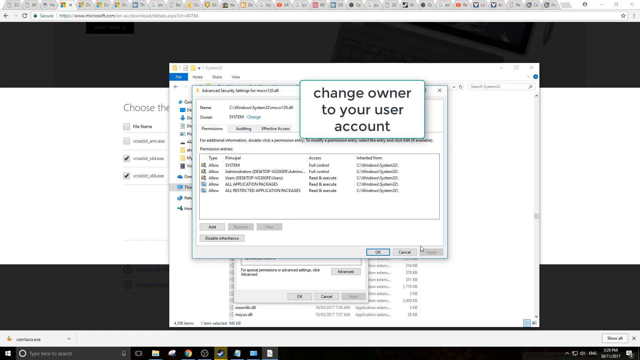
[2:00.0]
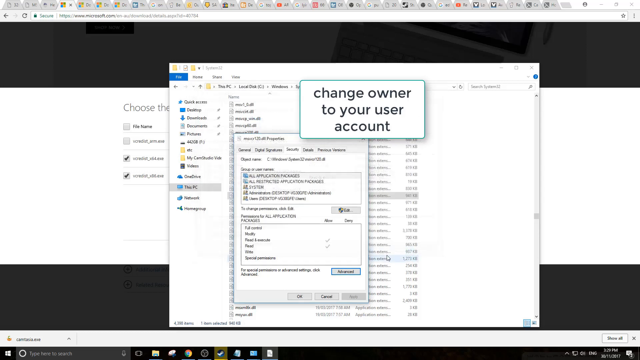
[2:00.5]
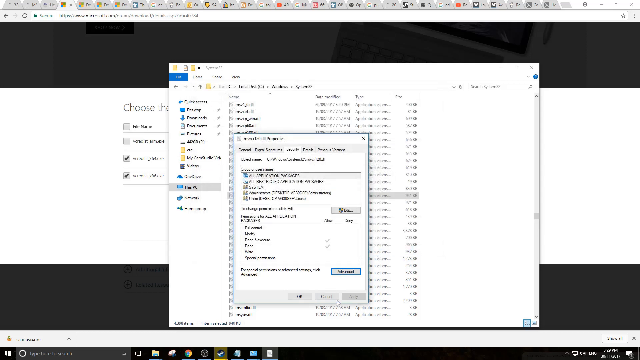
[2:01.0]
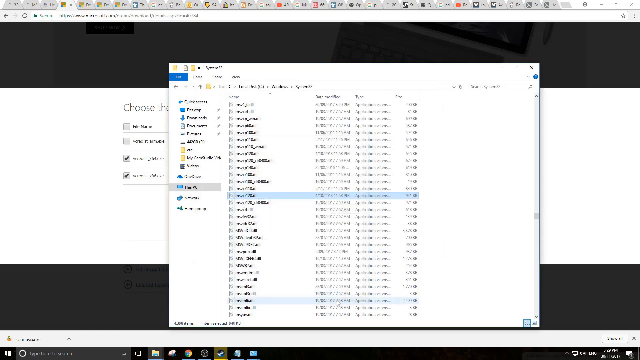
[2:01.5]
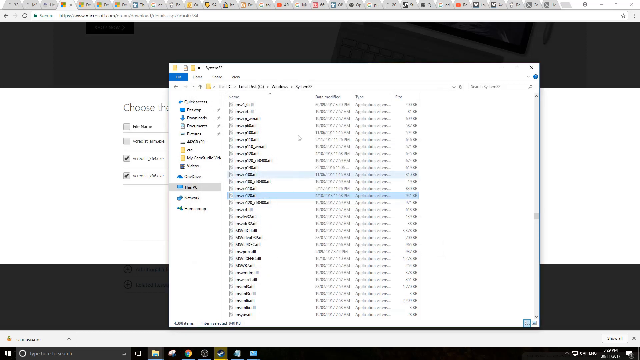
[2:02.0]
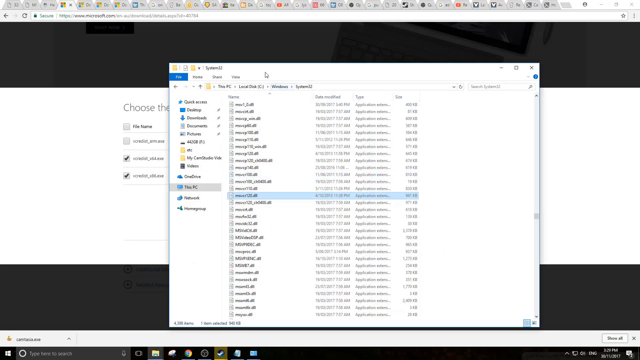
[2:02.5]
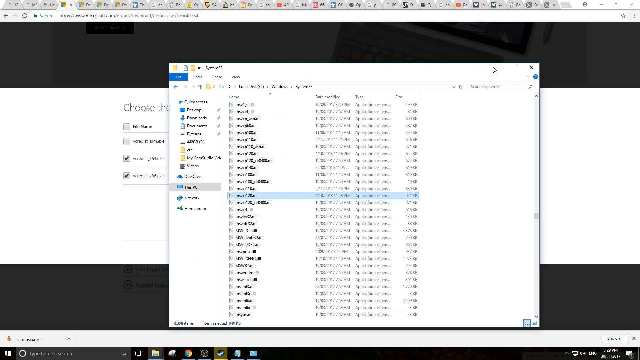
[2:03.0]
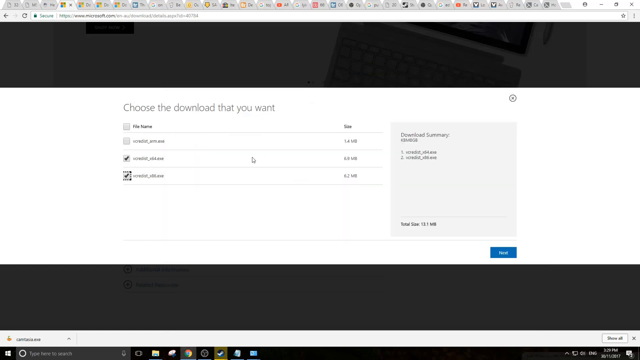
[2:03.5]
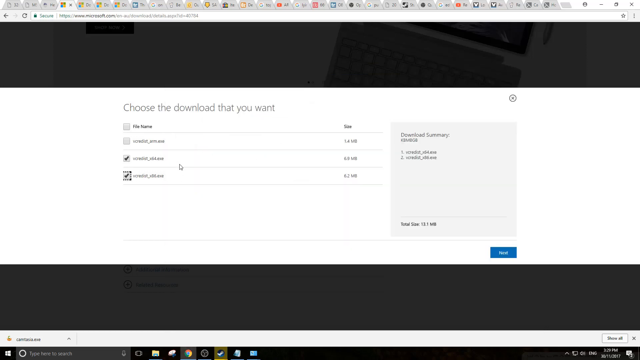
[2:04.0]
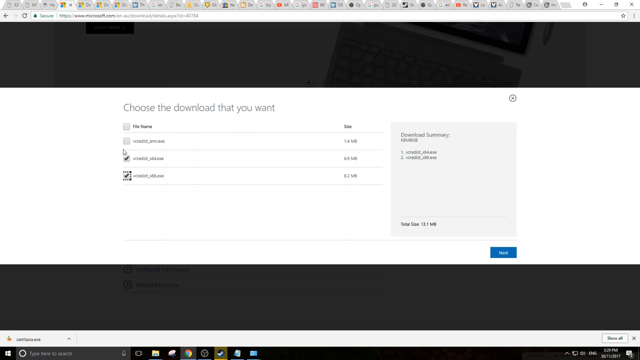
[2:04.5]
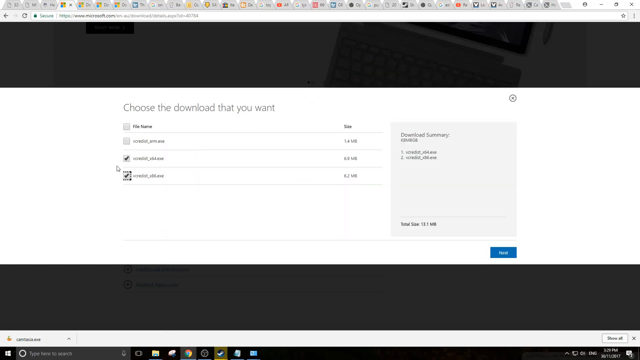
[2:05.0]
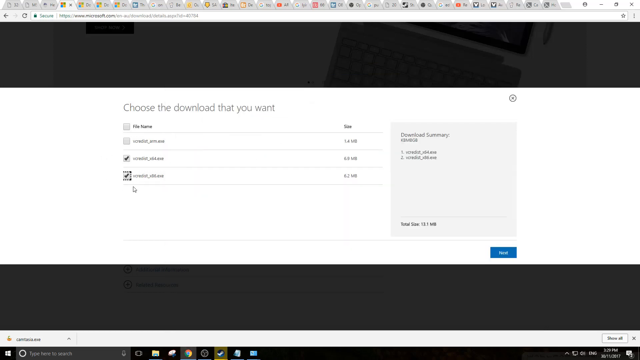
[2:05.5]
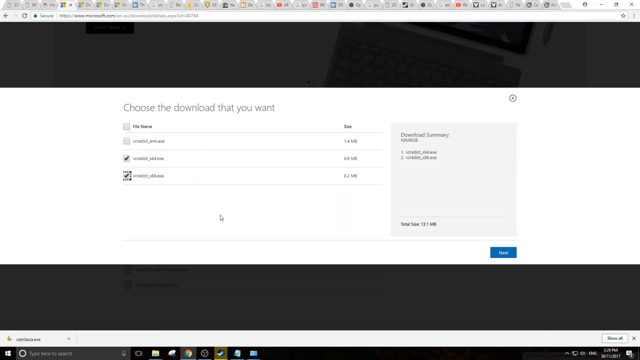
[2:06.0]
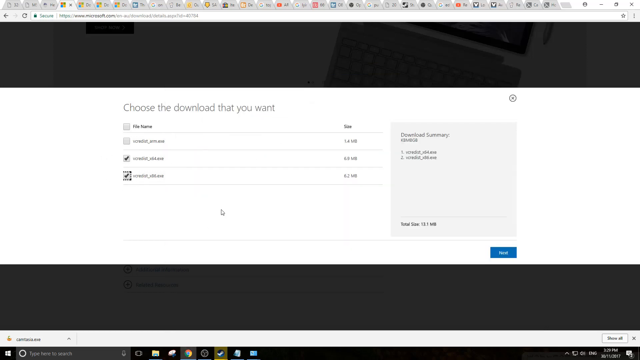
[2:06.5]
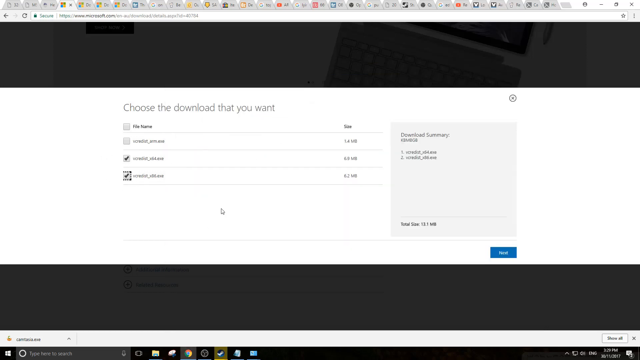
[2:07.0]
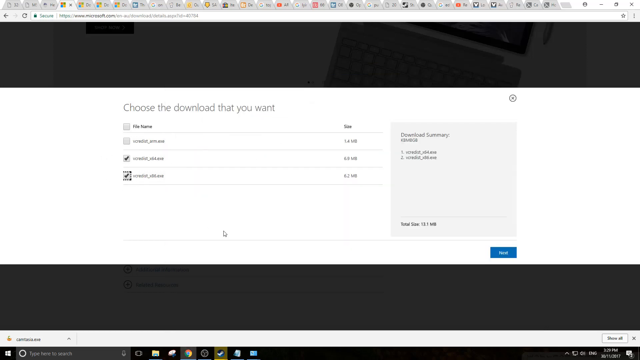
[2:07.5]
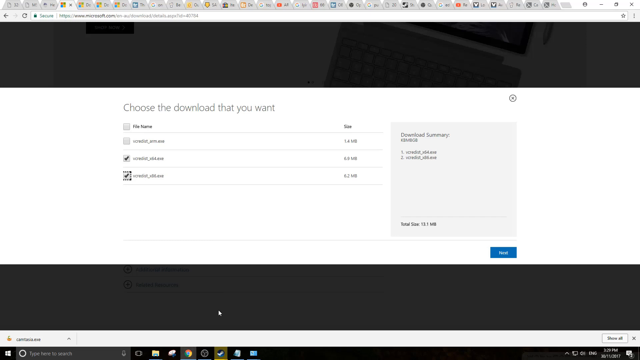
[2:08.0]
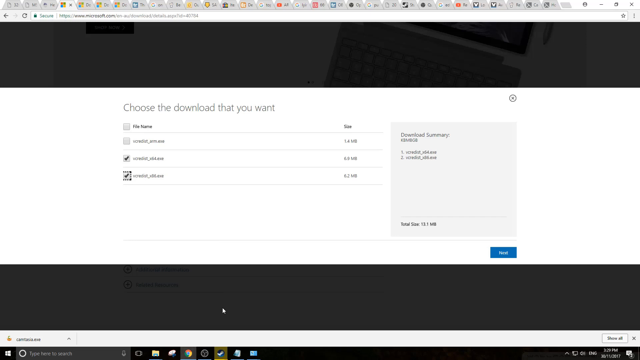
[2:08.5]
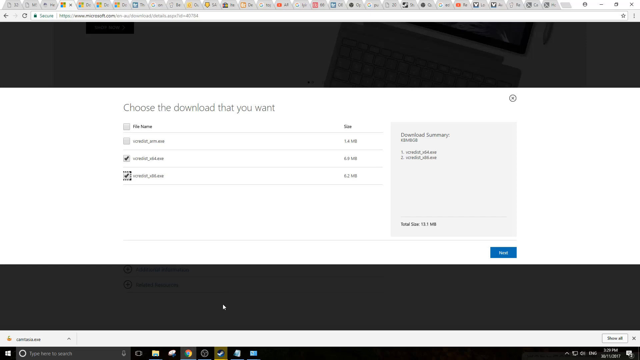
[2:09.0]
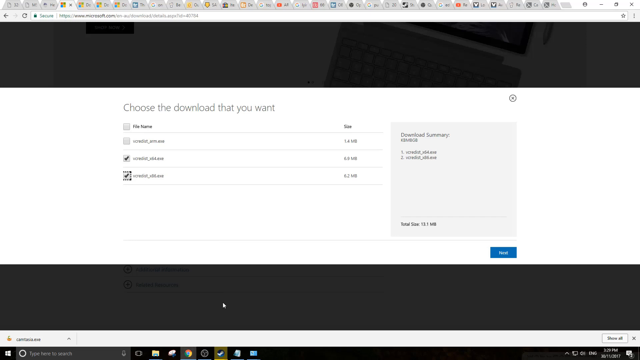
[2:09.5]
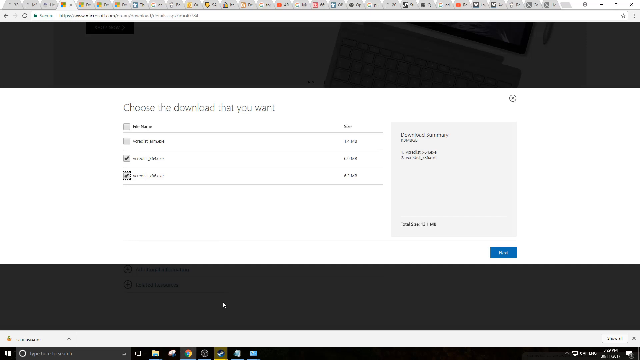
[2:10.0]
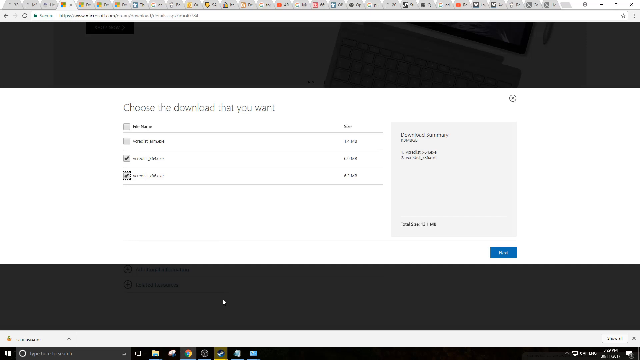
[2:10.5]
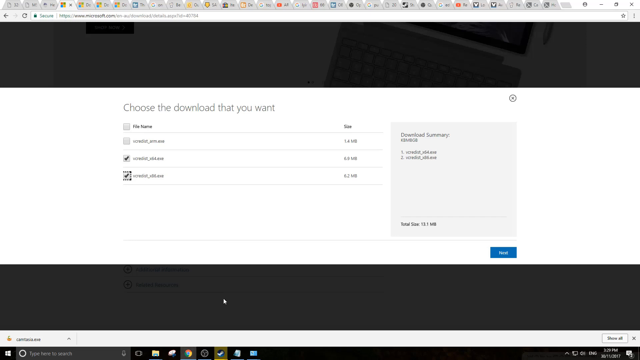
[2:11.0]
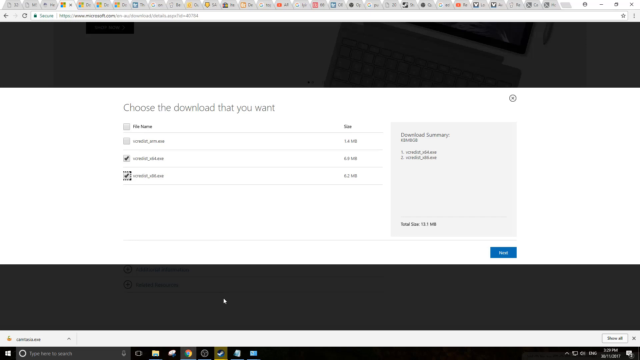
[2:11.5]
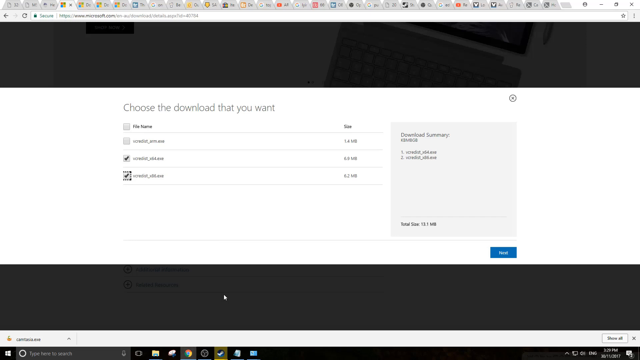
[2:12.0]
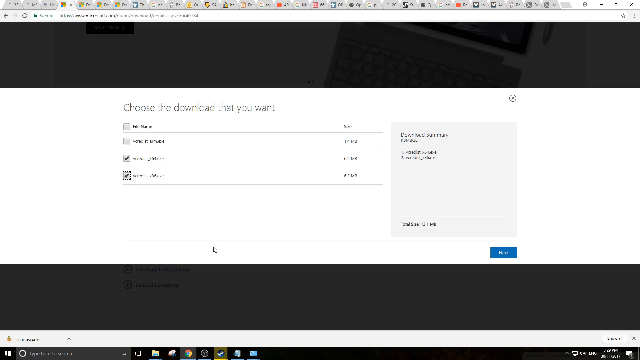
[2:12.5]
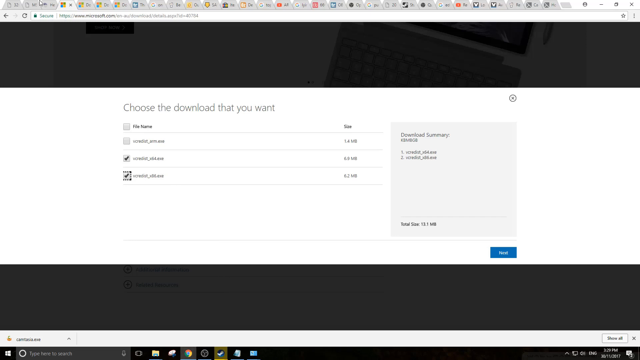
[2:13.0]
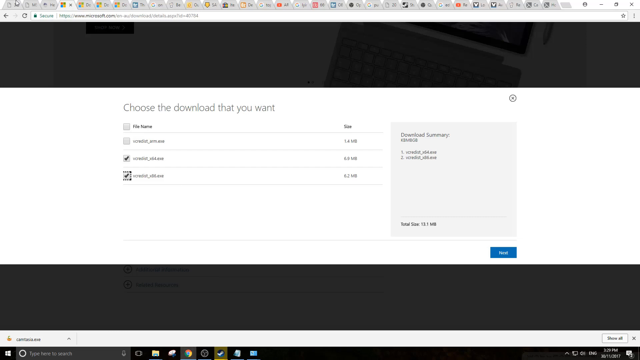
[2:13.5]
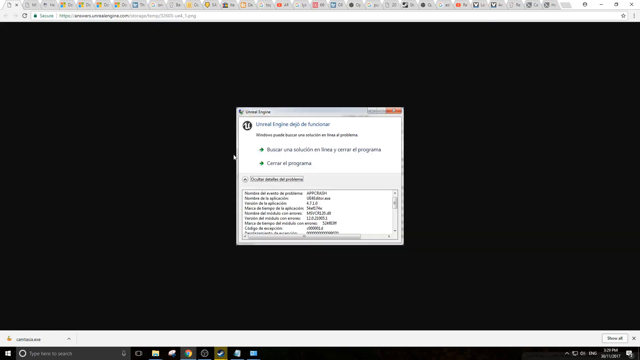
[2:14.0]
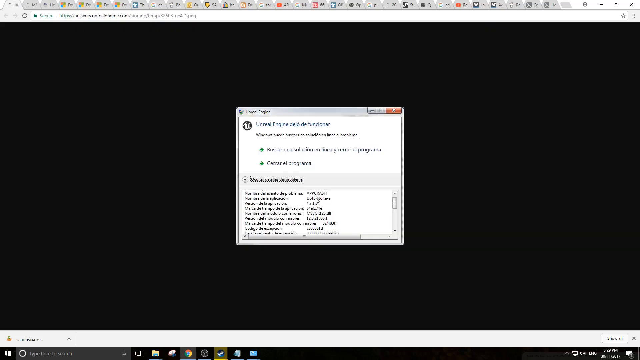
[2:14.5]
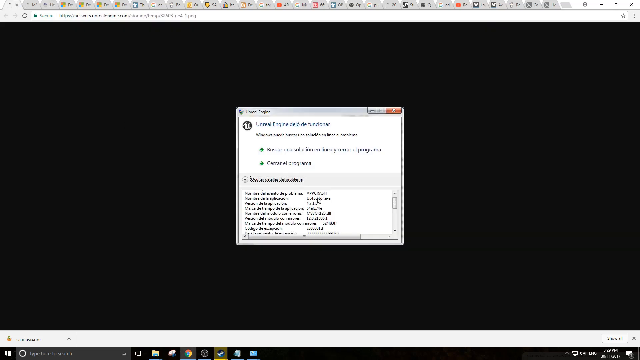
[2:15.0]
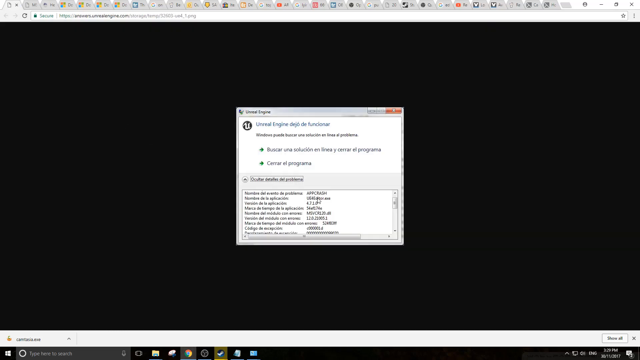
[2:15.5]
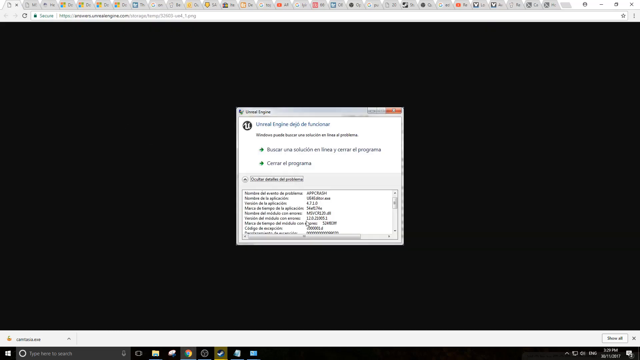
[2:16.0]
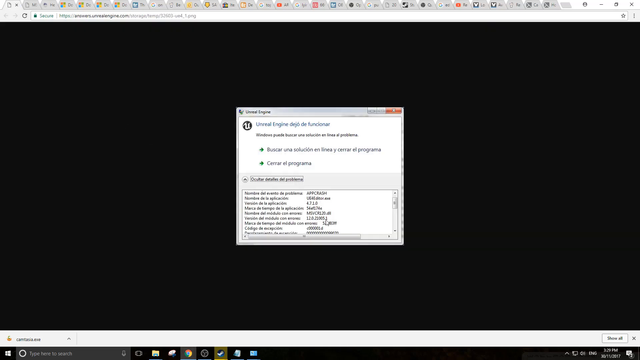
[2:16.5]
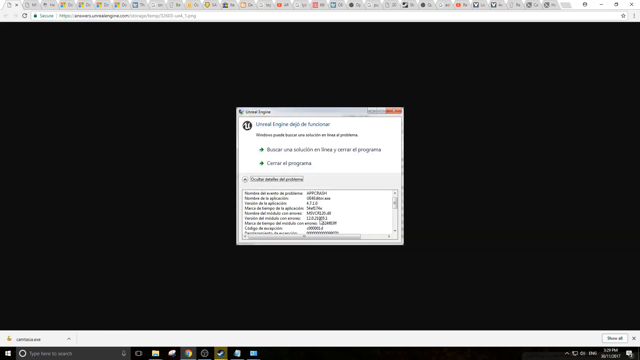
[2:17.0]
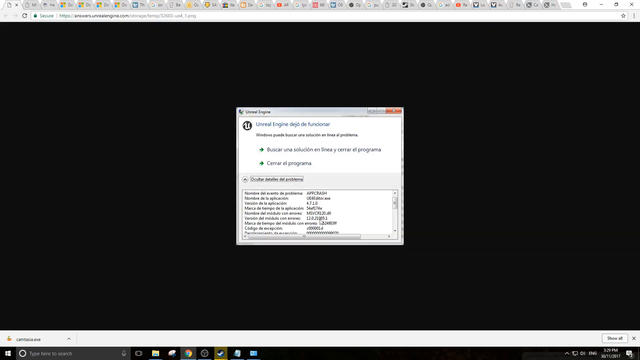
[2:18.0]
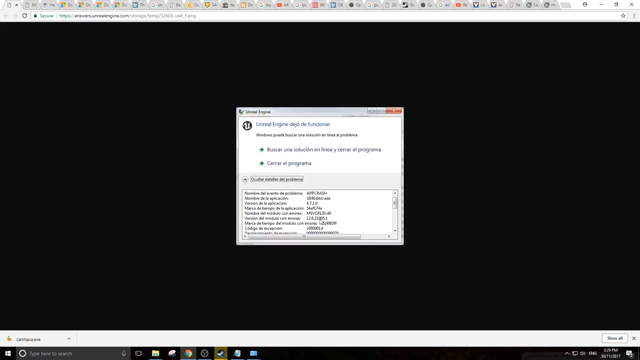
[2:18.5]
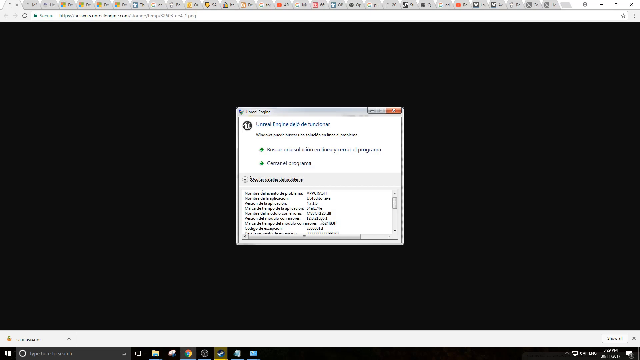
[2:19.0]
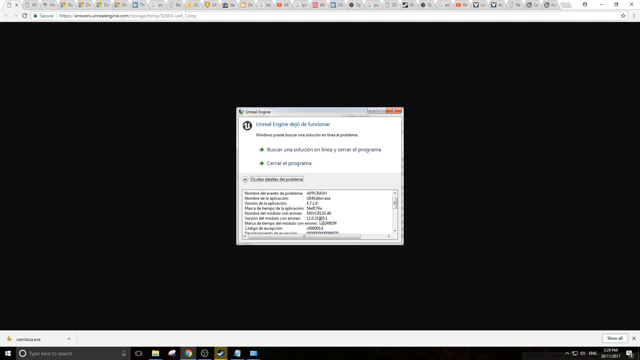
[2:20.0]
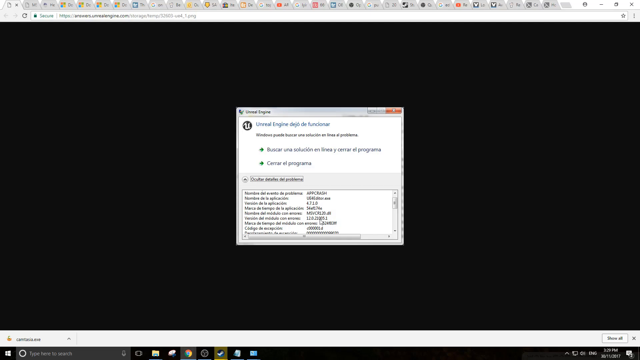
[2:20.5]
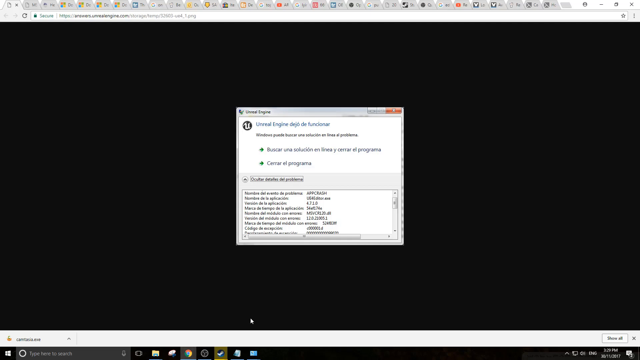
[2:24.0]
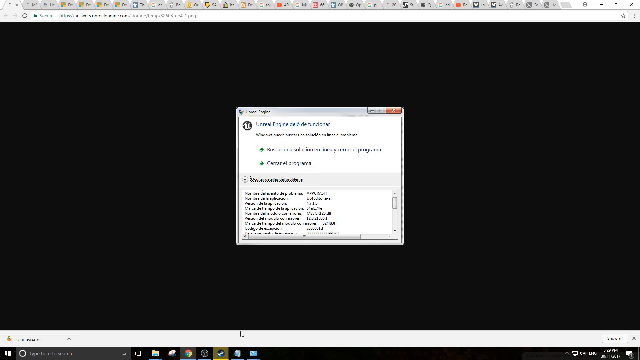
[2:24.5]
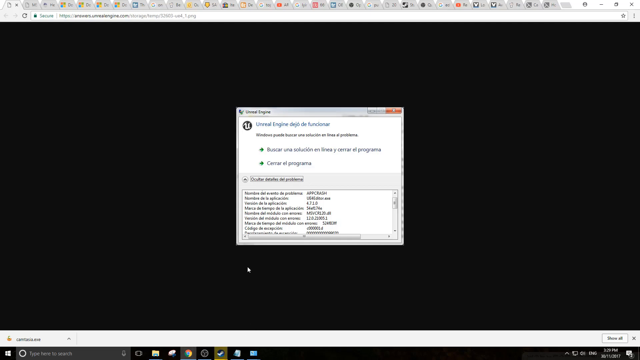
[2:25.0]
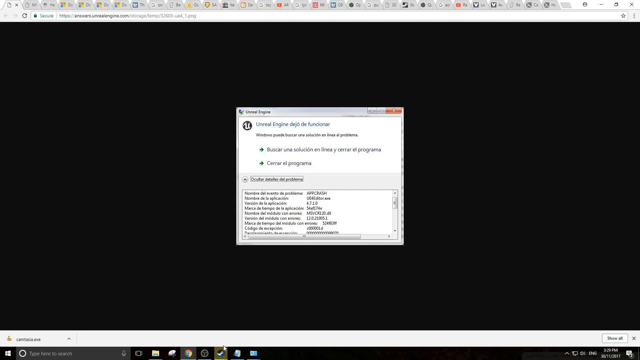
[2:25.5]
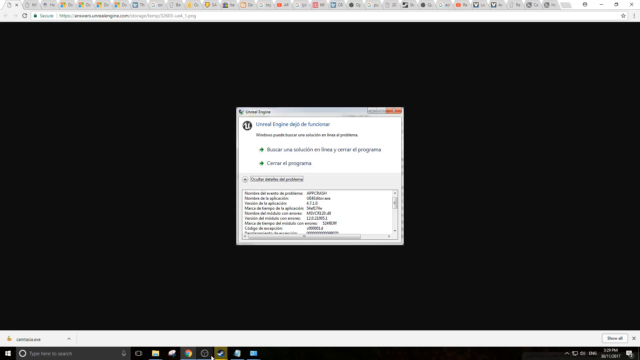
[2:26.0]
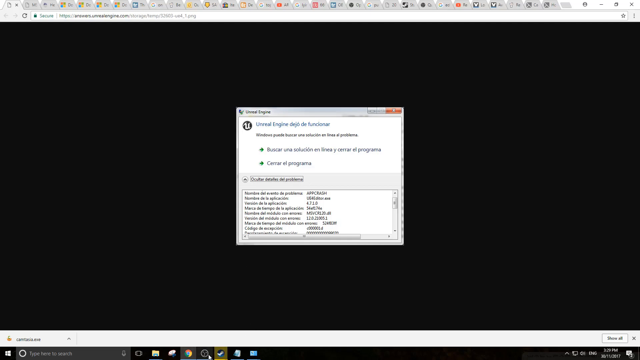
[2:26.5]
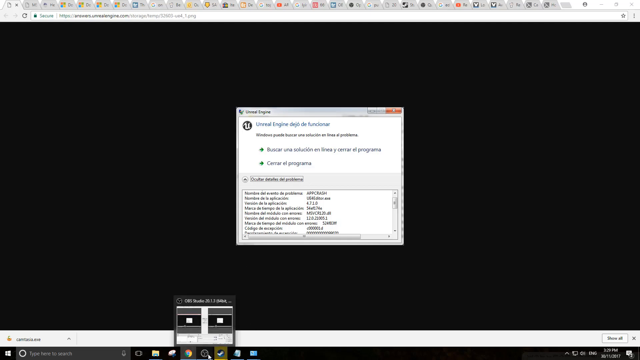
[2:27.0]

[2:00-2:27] The user cancels the security and permissions boxes and the folder with all the different file types, returning to the download page, which says "choose the download that you want". Of the three files, the second and third are still ticked, and the user draws rings with the mouse around these two ticked files at the bottom. The user then switches back to a tab seen earlier, in a language that is not English and appears to be Spanish. Two green arrows offer different options: one looks to be for looking for a solution and the other is possibly for closing the program. A details box below these options contains information about different files and versions, and the user points out some of them with the mouse.